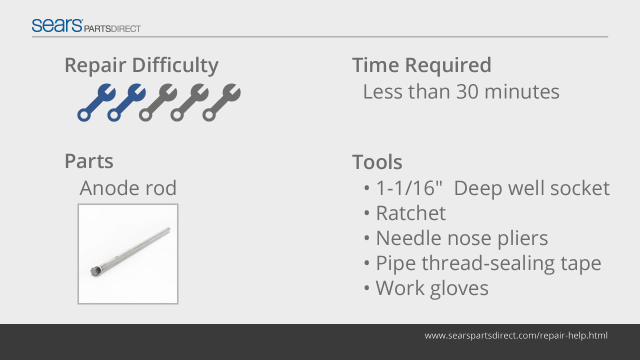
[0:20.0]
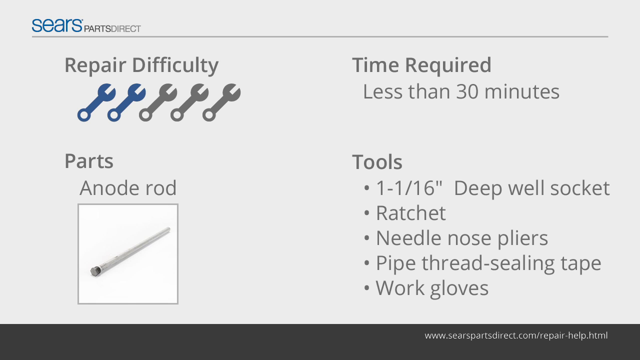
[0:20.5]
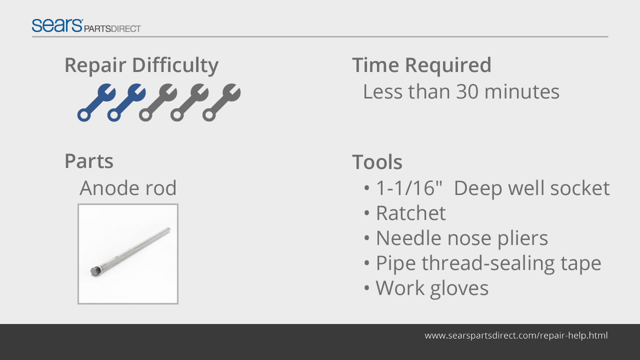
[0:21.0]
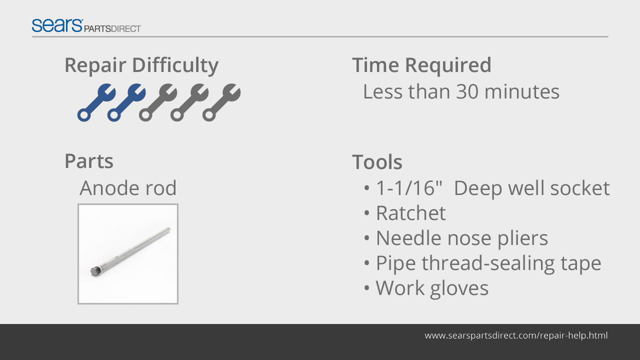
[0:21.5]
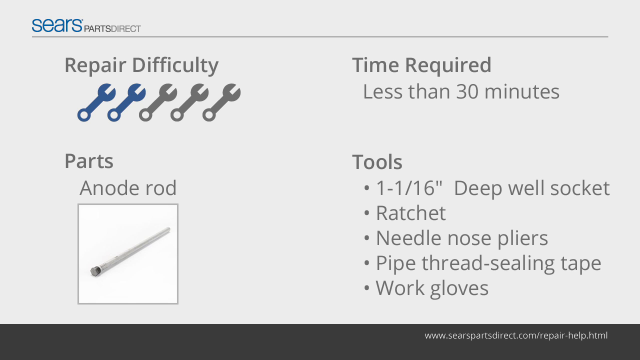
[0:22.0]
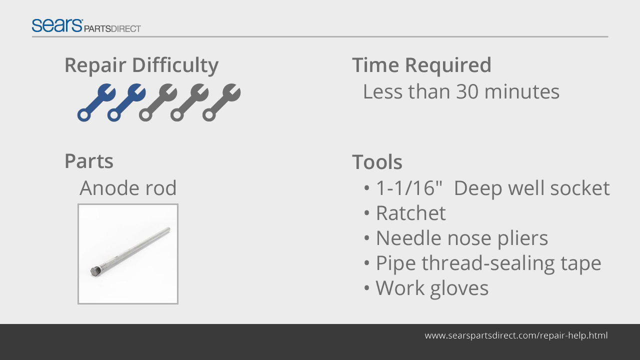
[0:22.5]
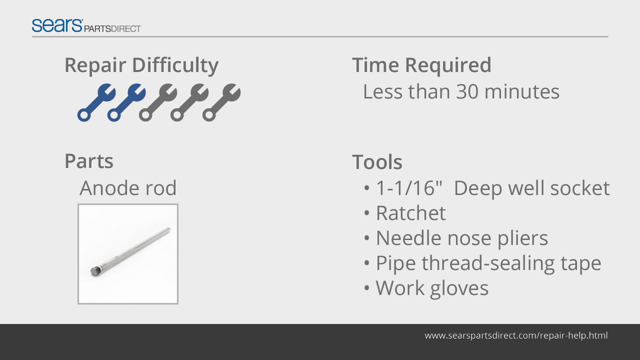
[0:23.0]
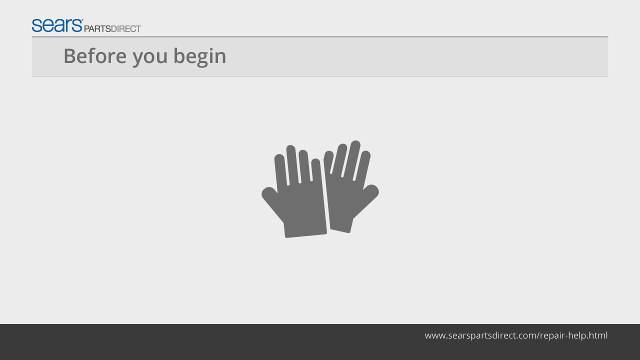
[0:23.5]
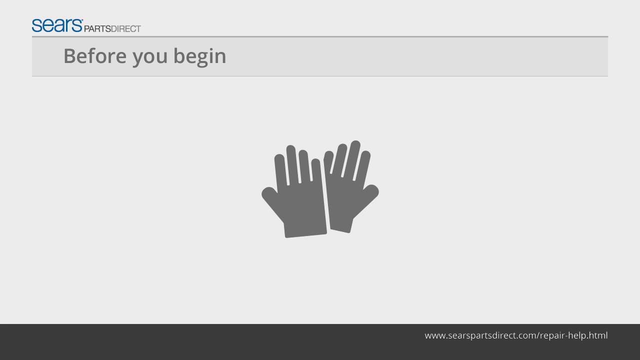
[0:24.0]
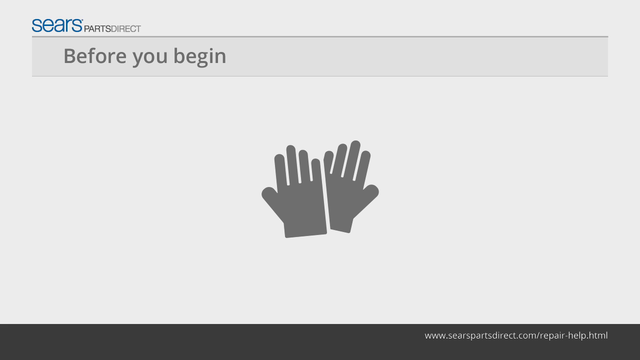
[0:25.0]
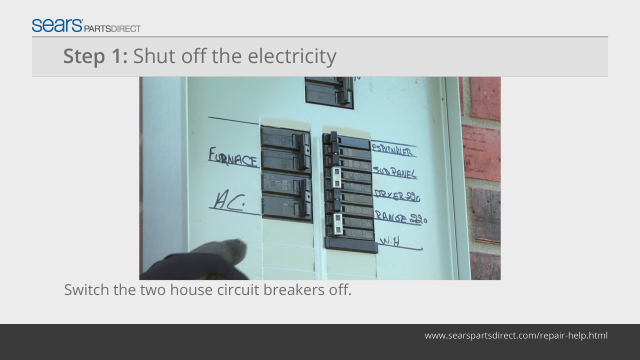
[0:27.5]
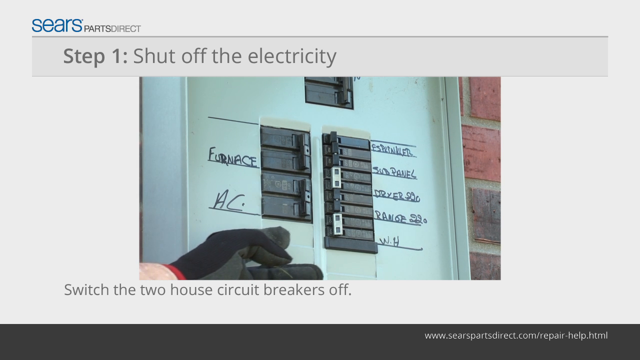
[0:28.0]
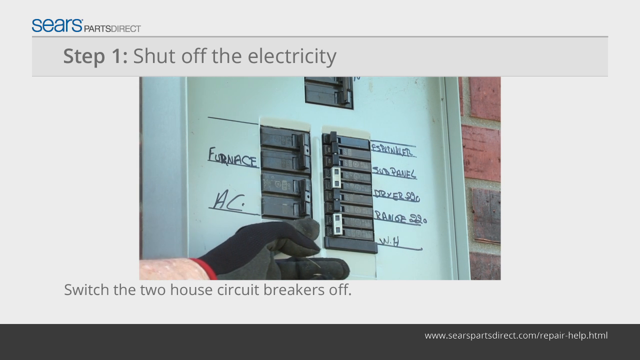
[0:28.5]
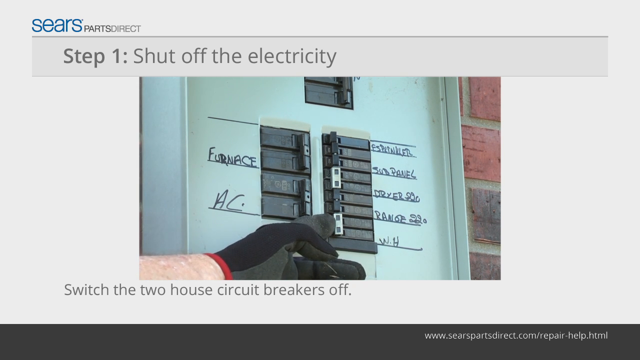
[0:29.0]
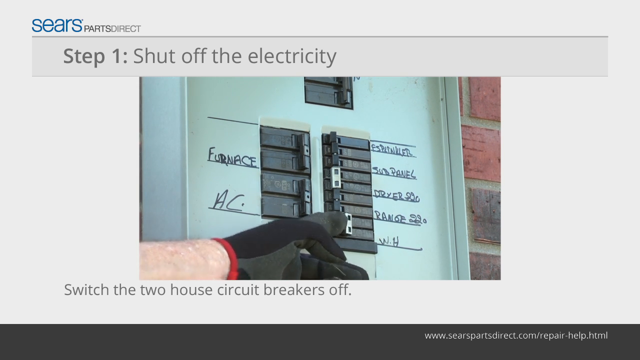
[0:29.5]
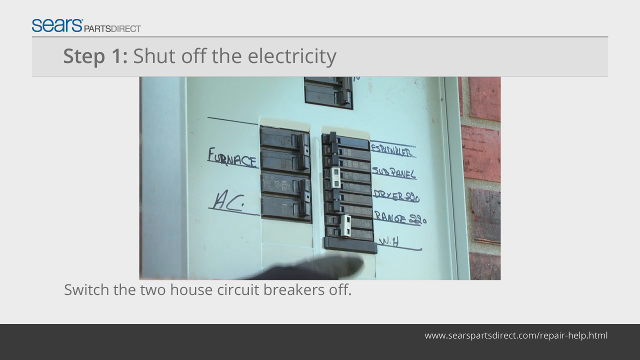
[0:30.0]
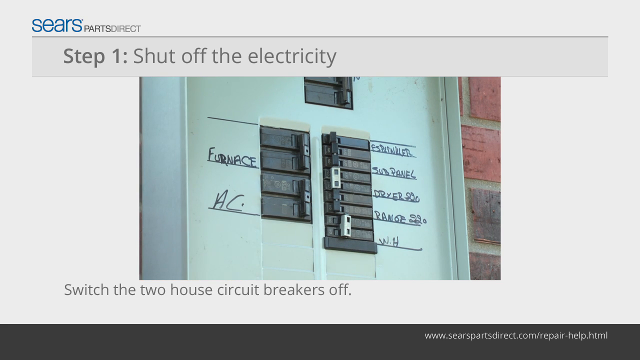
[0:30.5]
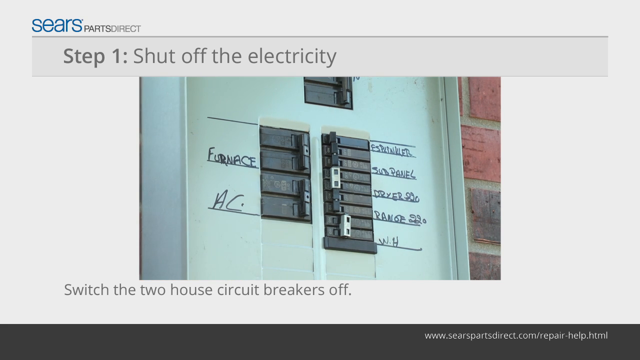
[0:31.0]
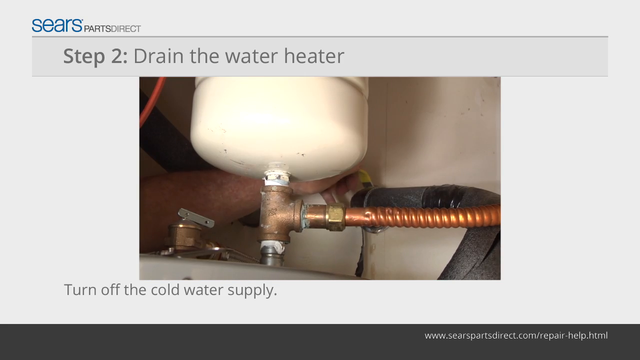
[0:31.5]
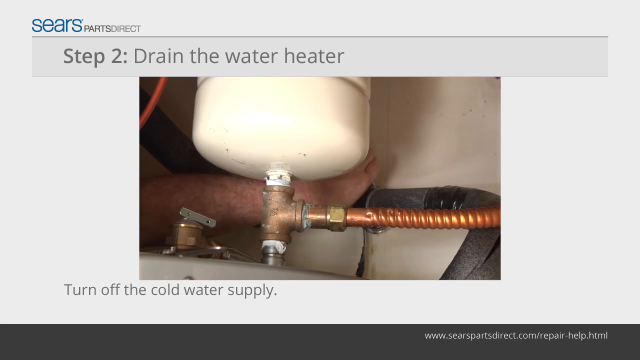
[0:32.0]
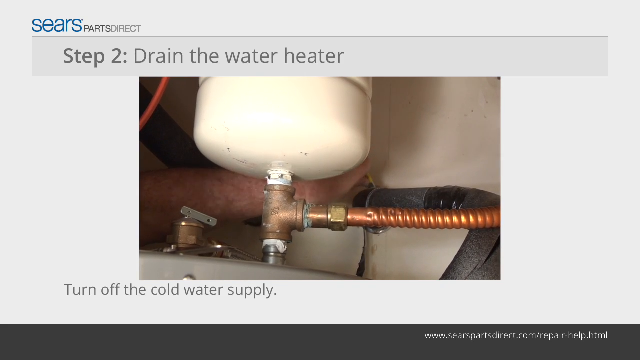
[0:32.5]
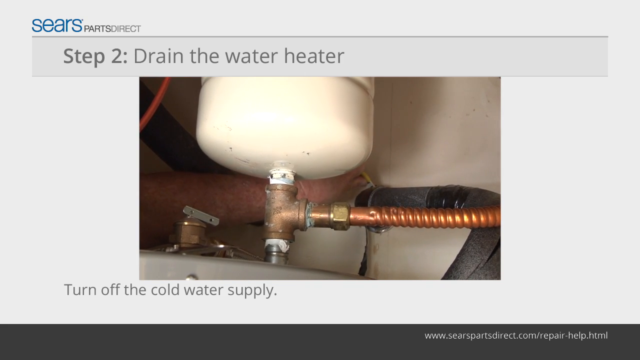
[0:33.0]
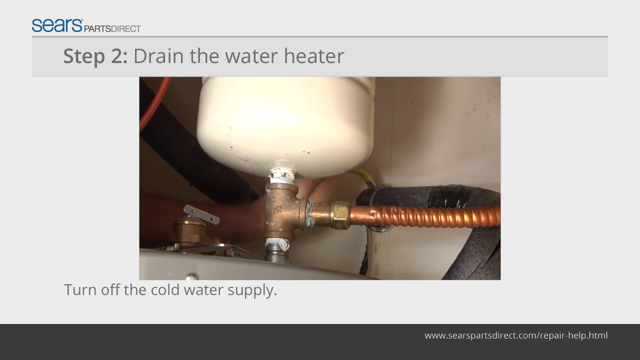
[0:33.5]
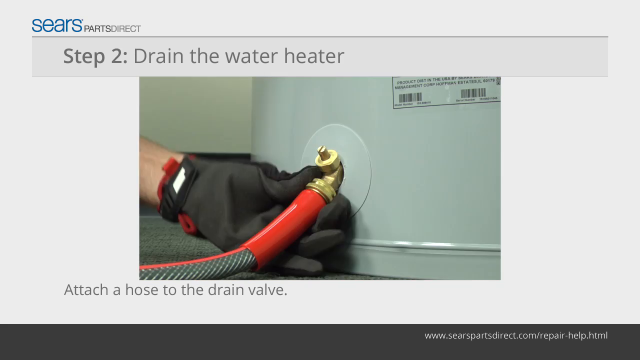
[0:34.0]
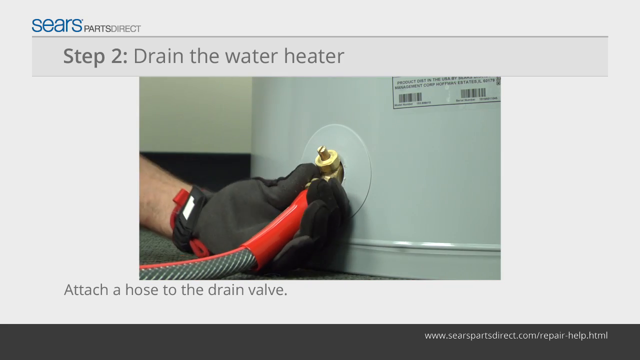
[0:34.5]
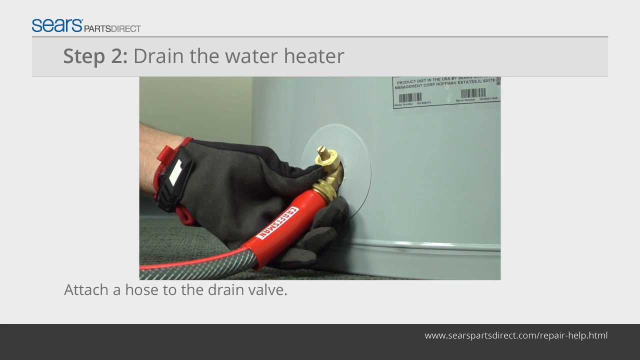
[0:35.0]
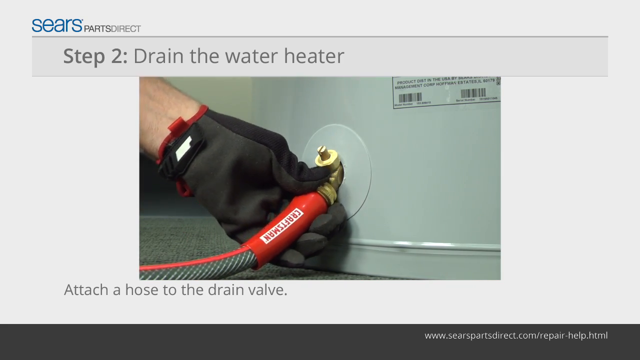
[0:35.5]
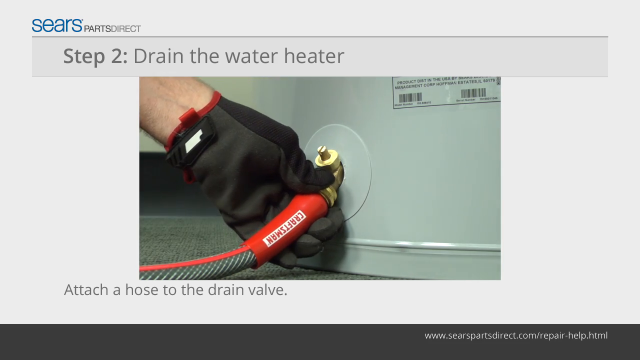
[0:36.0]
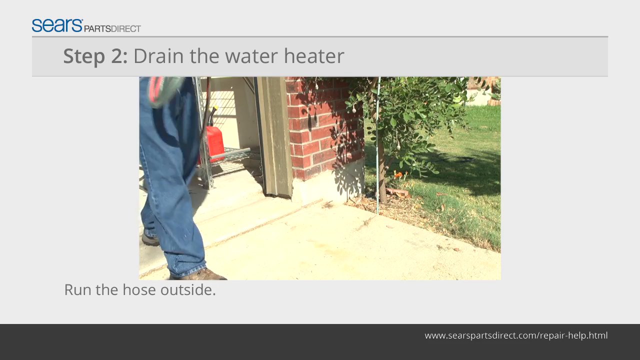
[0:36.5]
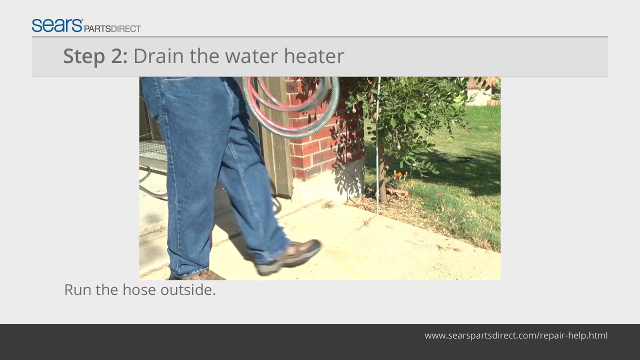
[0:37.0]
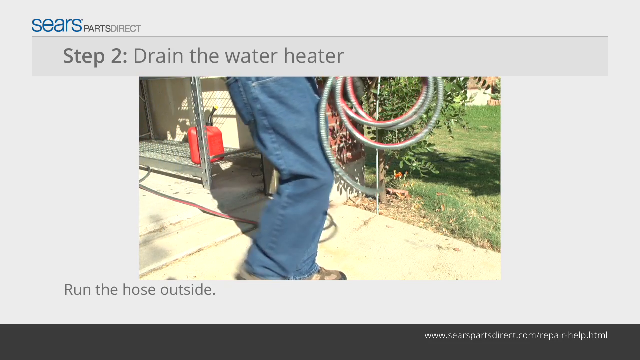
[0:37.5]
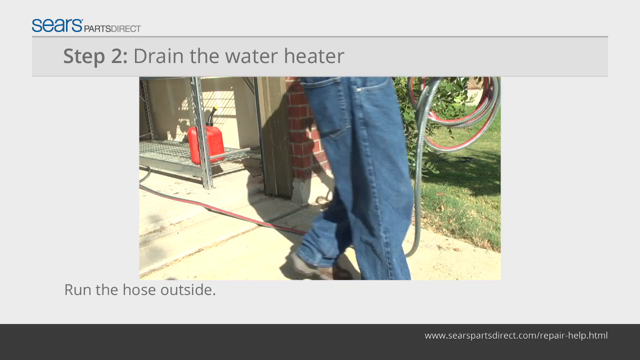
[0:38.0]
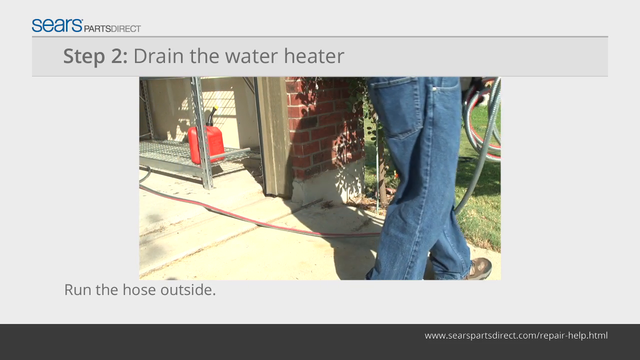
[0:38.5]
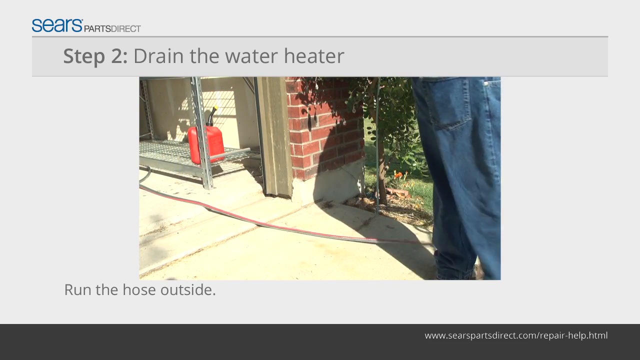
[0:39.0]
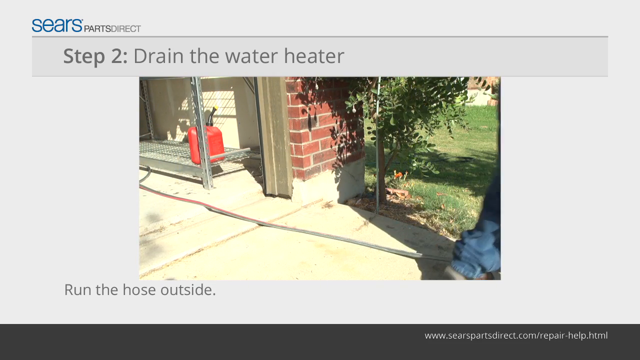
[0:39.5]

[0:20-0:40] An overview screen of the repair has "Sears Parts Direct" at the top, with Sears in the same unusual blue font and "Parts Direct" smaller in dark to light gray. "Repair difficulty" and "Part" are on the left of the screen, and "Time required" and "Tools" are on the right. Everything is gray except the repair difficulty, which shows up to five wrenches with two of them in blue, a difficulty of two wrenches that is probably mildly difficult. Under "Part" is a picture showing what the part looks like, without its name. The time required is 30 minutes, and the tools listed include a deep well socket, needle nose pliers, threading tape and work gloves. Another screen, all green, says "before you begin" and has a picture of what looks like gloves. Next is a circuit breaker, with instructions to turn off the electricity to the appliance; it just says "WH", apparently meaning the water heater. Another screen follows with Sears Parts Direct in the same font and "Step two, drain the water heater." It shows the water heater, says "turn off the cold water supply", and shows a person turning off the cold water supply. It then shows a hose being attached to the water heater and says "you have to drain the water heater", with someone apparently taking a hose out from the water heater.